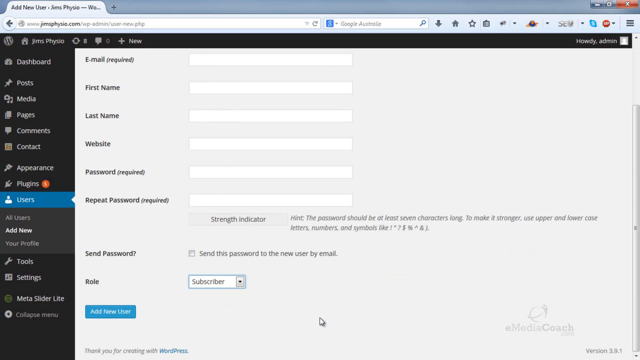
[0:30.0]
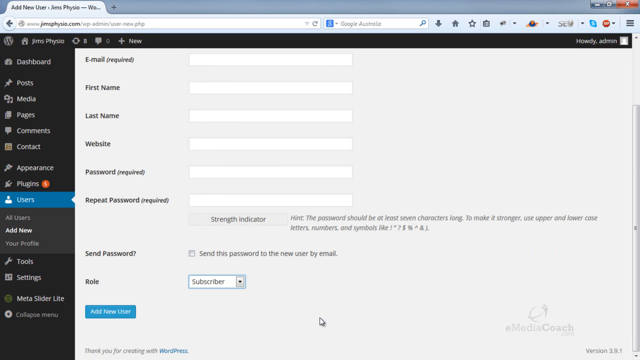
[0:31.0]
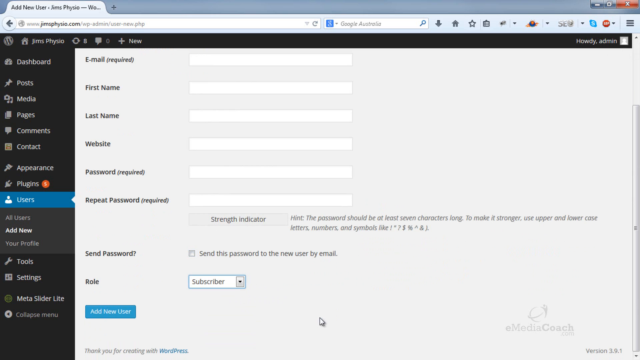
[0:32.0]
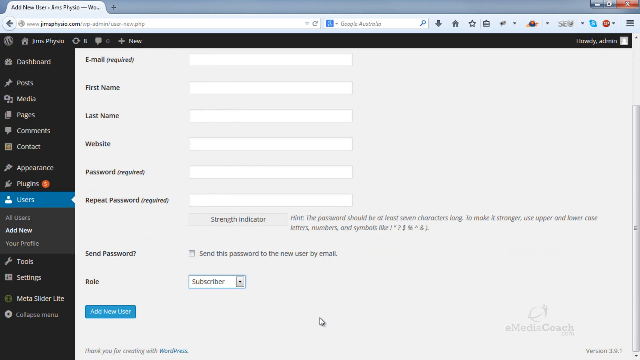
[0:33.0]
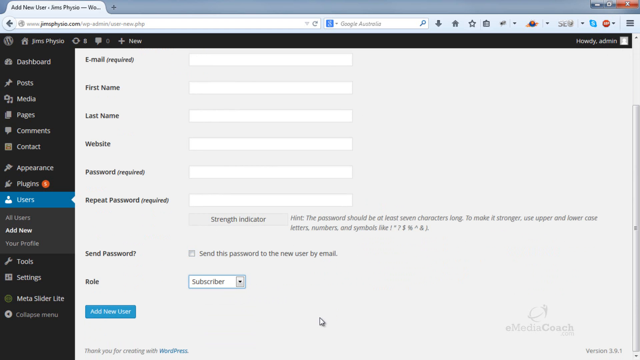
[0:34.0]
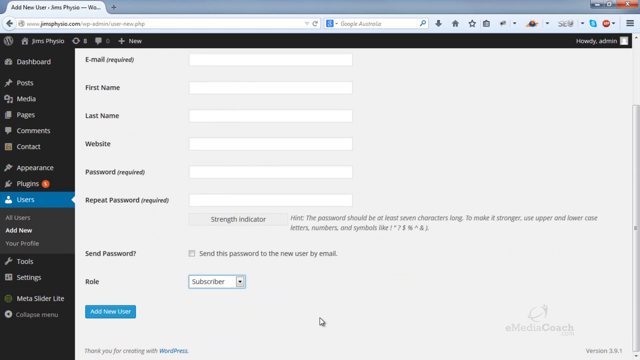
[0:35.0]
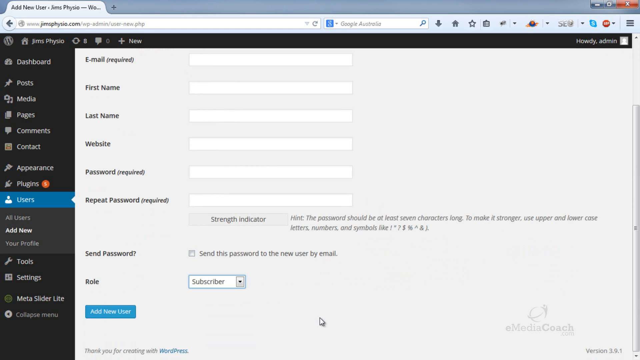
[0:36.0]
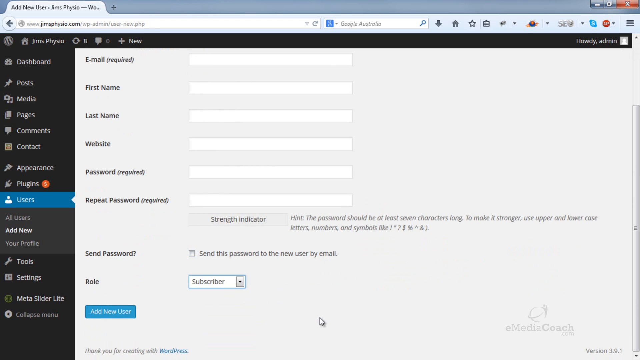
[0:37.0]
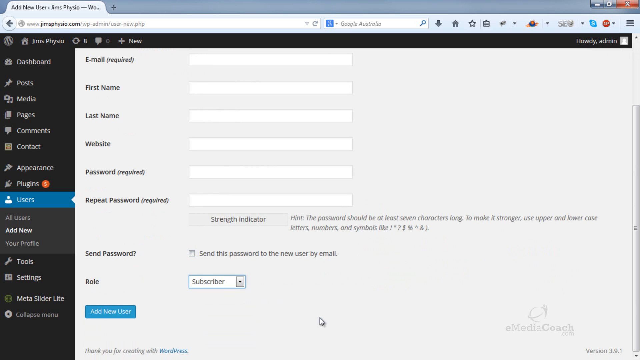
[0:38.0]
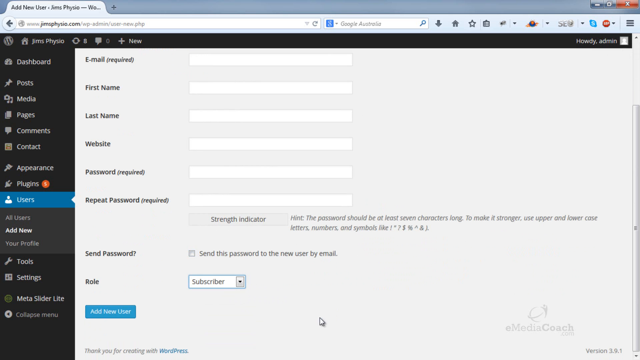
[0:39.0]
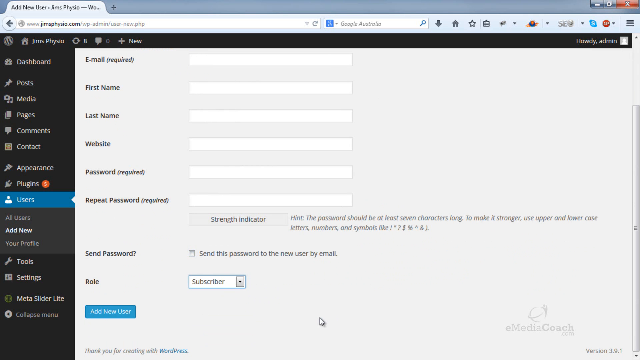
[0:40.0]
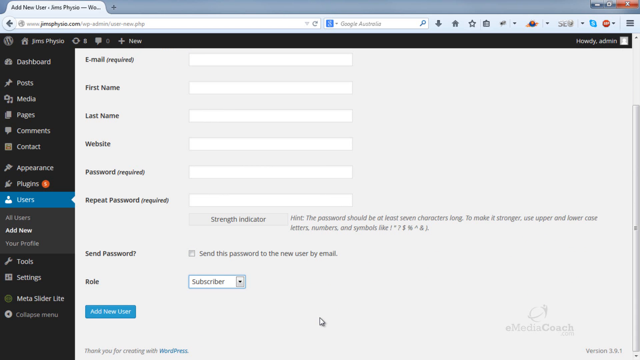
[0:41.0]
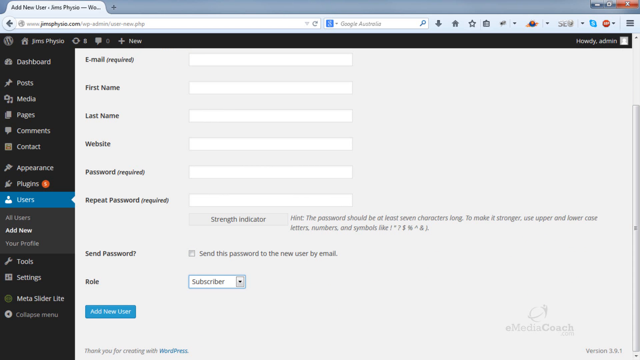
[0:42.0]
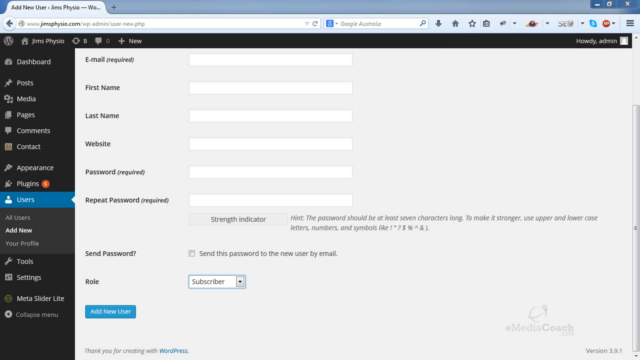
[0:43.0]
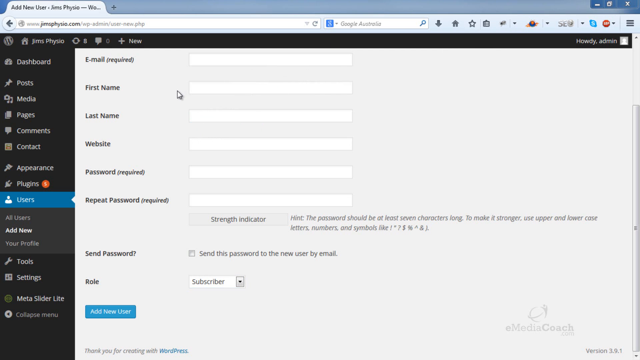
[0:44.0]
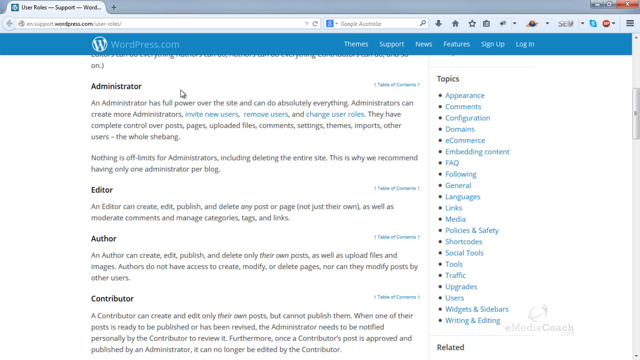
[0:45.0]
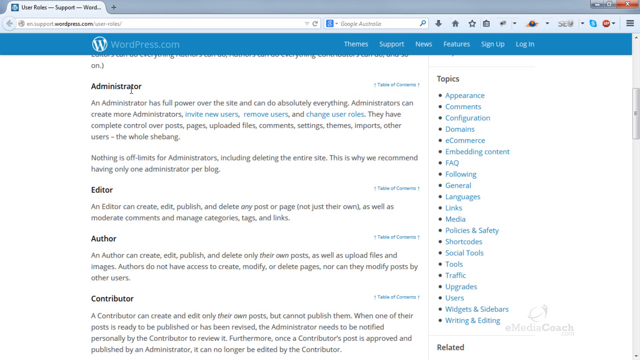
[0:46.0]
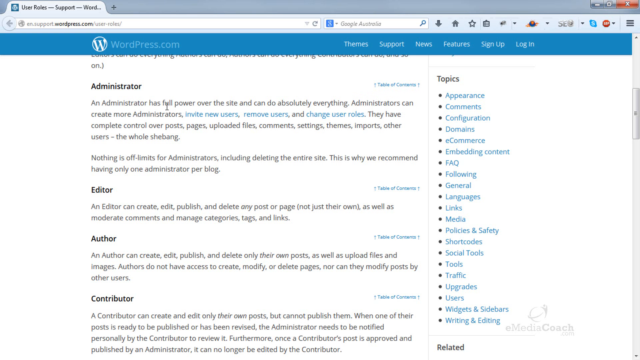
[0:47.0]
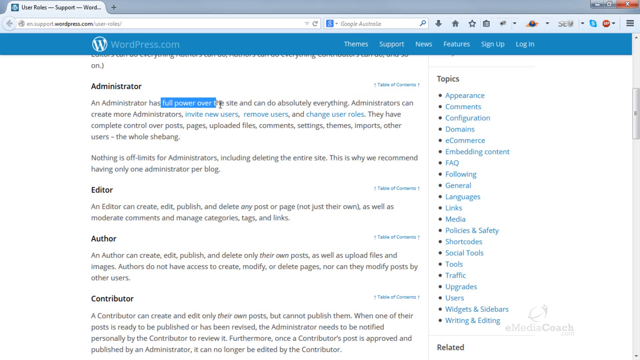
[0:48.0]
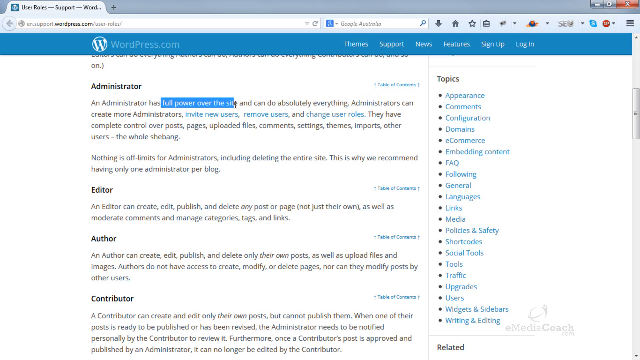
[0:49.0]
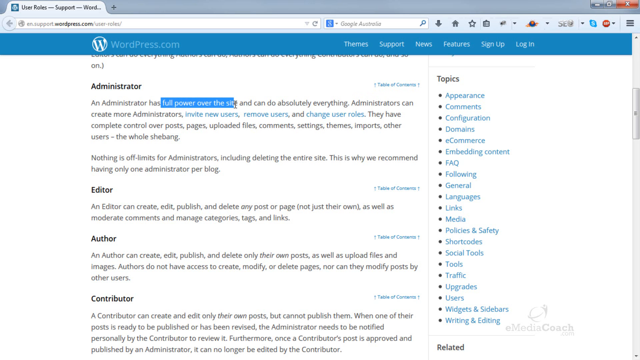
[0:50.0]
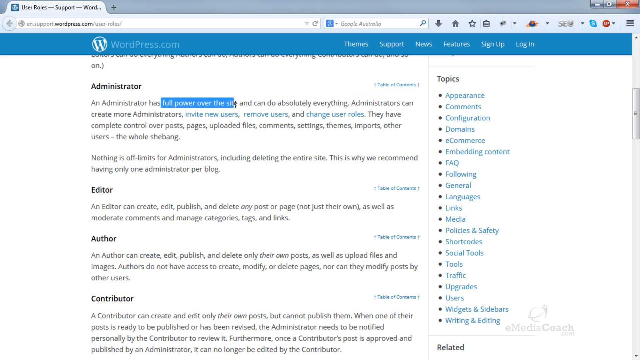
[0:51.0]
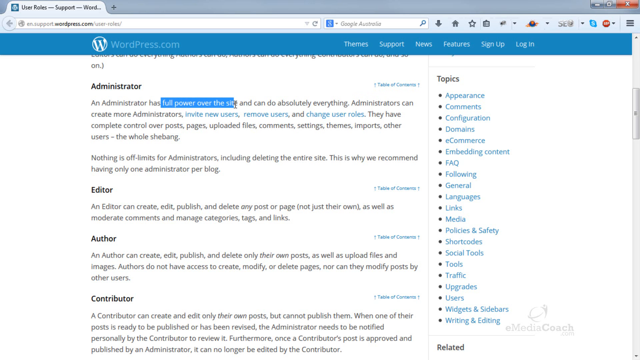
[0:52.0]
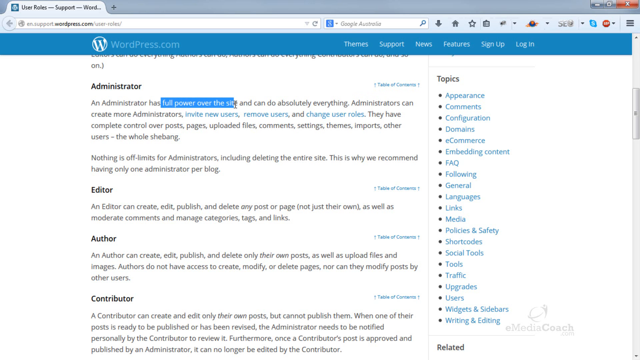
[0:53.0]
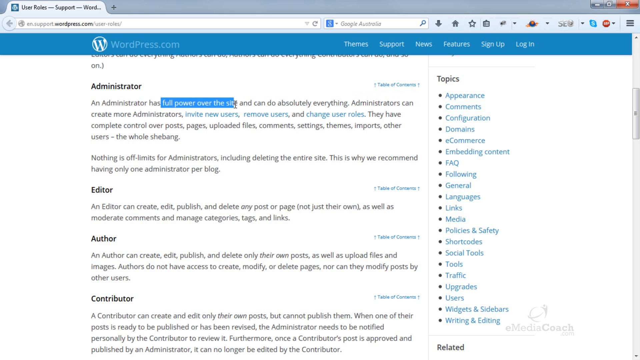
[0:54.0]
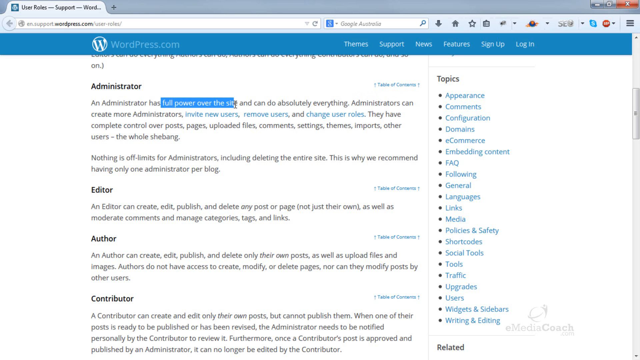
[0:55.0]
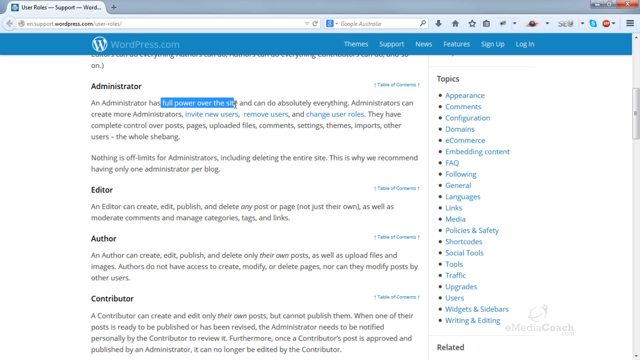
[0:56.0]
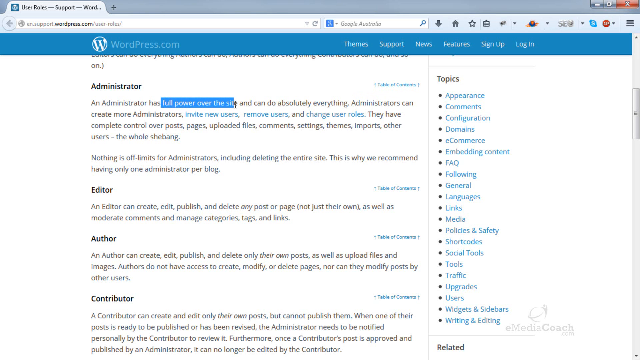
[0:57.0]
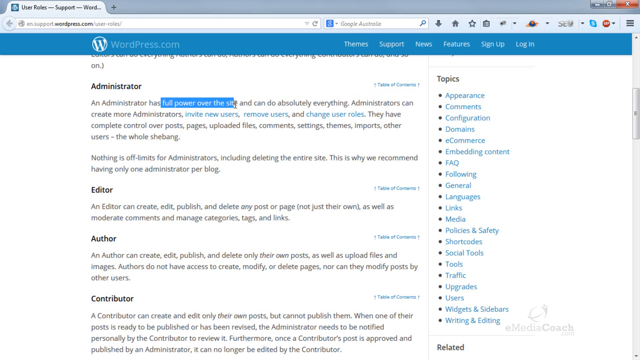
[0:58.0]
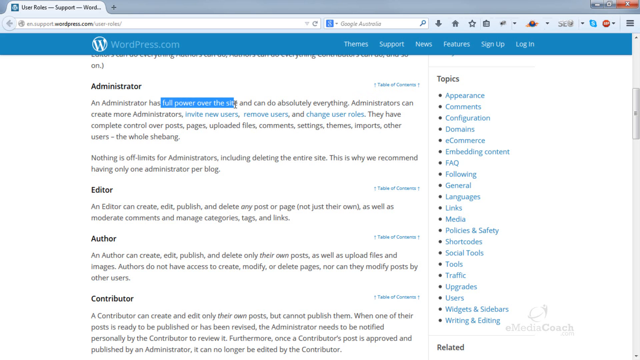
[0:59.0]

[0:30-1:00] The person is still in the users section, which is highlighted blue on the left-hand side. The page has the same black background with white font; one element has a blue background, with the font still white. For a while the person does not move the mouse, which rests at the bottom of the screen on the right side. Then they click on something and an administrator section pops up. It reads "administrator" and "wordpress.com", followed by: "An administrator has full power over the site and can do absolutely everything. Administrators can create more administrators, invite new users, remove users, change roles. They have complete control over posts, pages, uploaded files, comments, settings, themes, imports, and other users, the whole shebang. Nothing is off limits for administrators, including deleting the entire site. This is why we recommend having one administrator per blog." There are also areas for editor, author and contributor. The person highlights the first few words of the administrator section, "full power over the site".